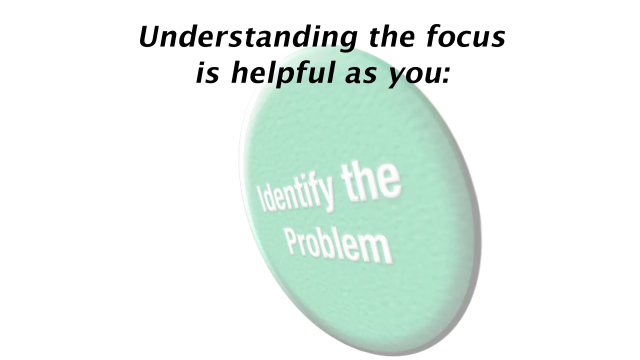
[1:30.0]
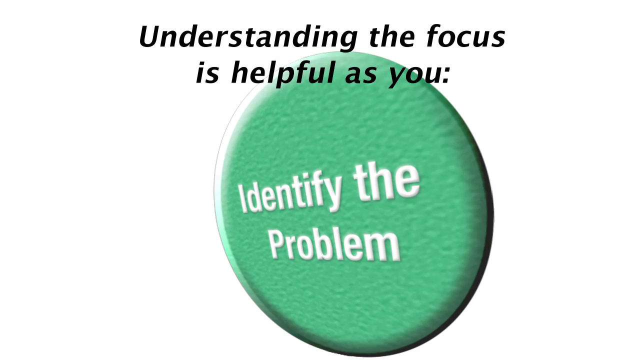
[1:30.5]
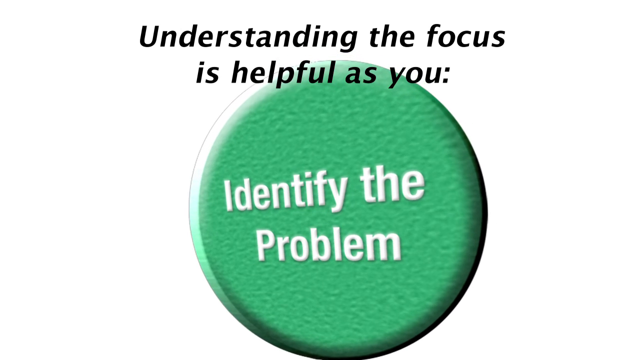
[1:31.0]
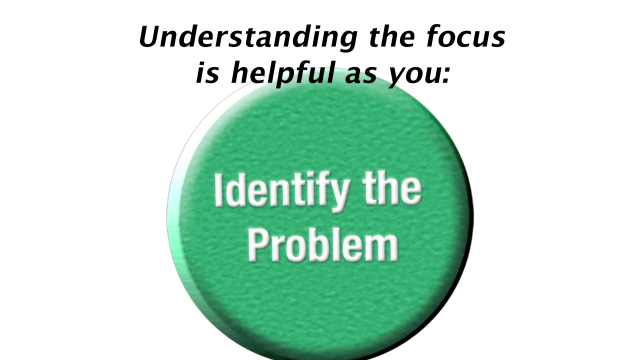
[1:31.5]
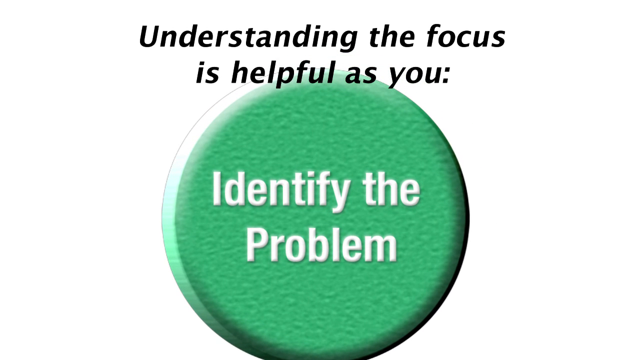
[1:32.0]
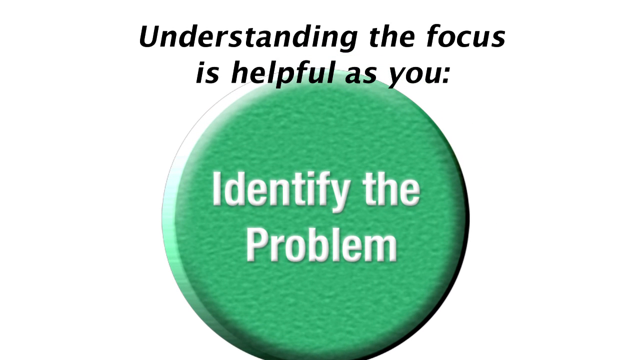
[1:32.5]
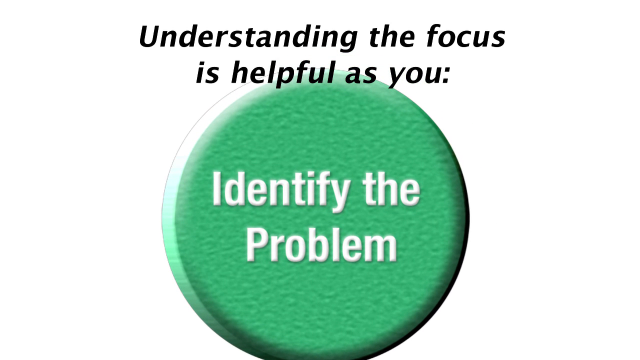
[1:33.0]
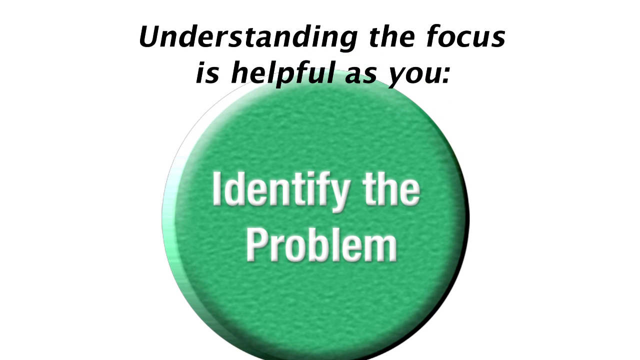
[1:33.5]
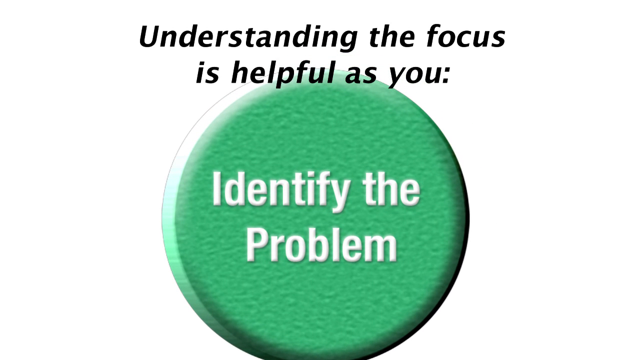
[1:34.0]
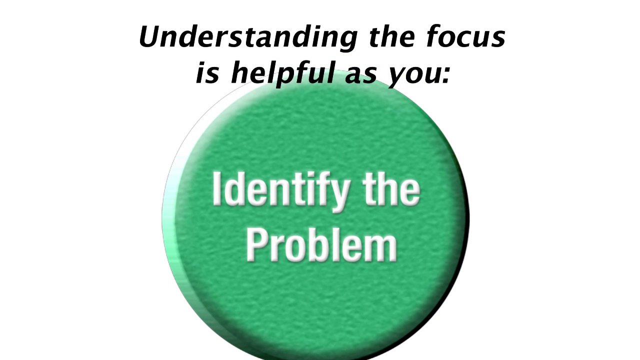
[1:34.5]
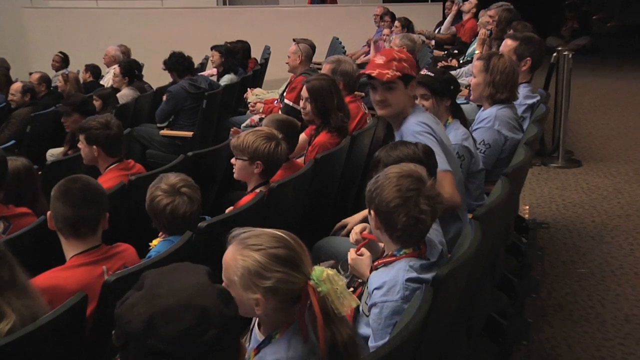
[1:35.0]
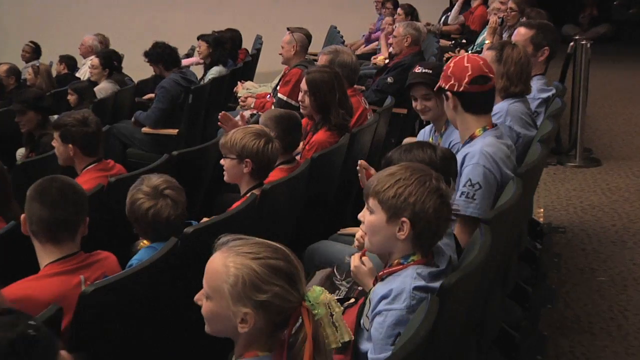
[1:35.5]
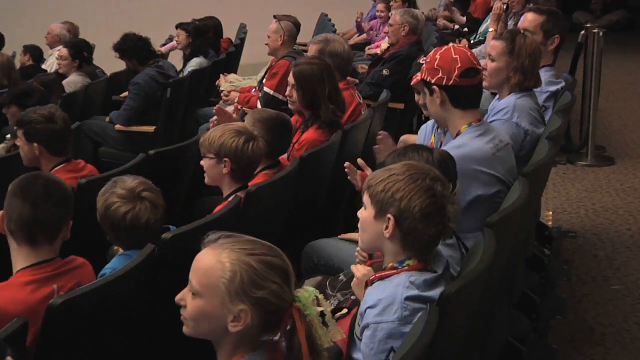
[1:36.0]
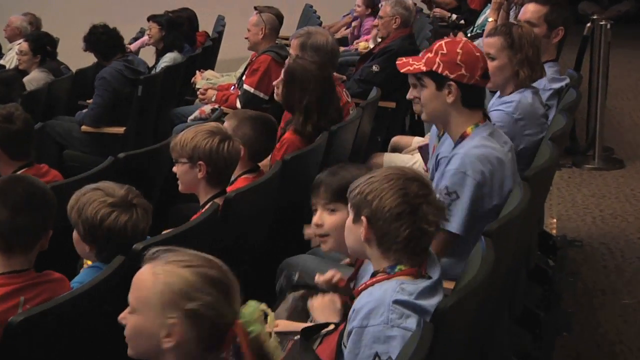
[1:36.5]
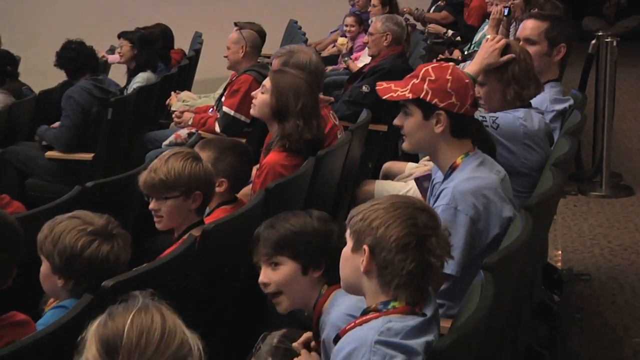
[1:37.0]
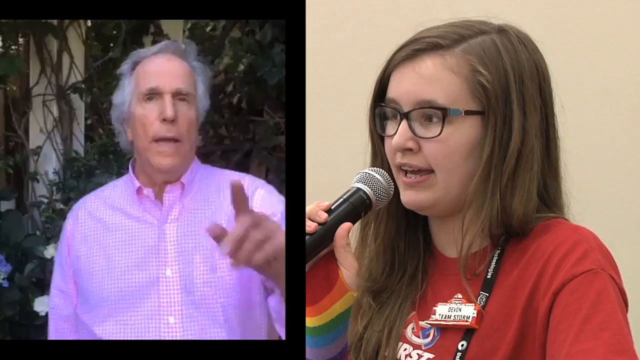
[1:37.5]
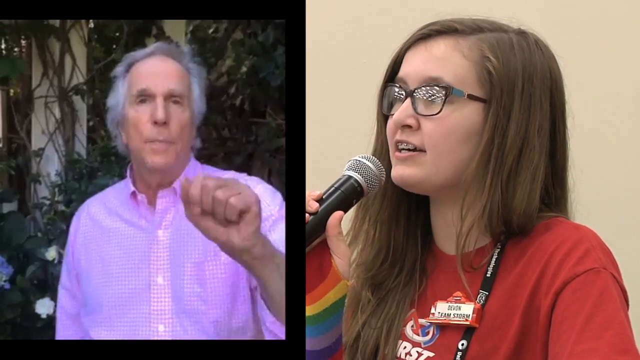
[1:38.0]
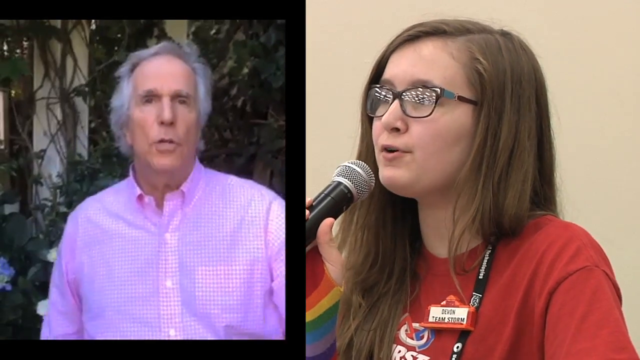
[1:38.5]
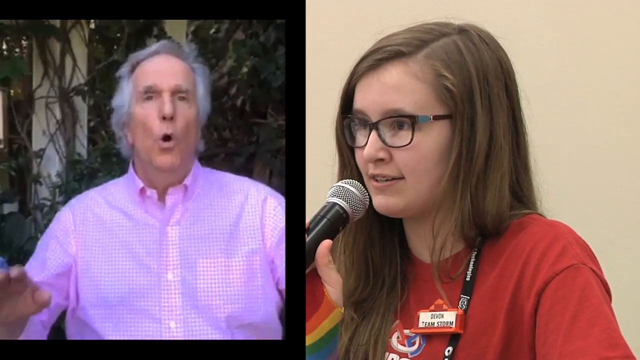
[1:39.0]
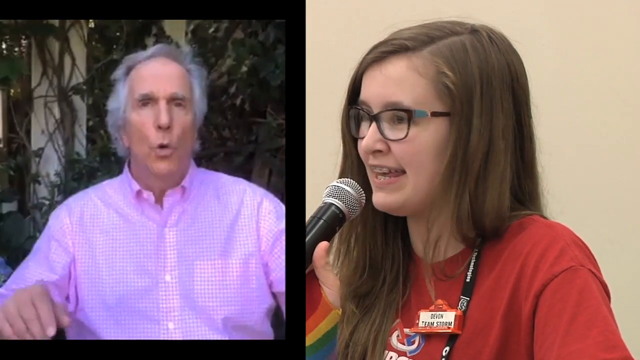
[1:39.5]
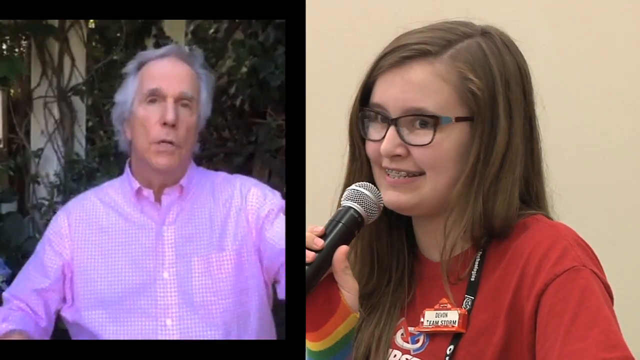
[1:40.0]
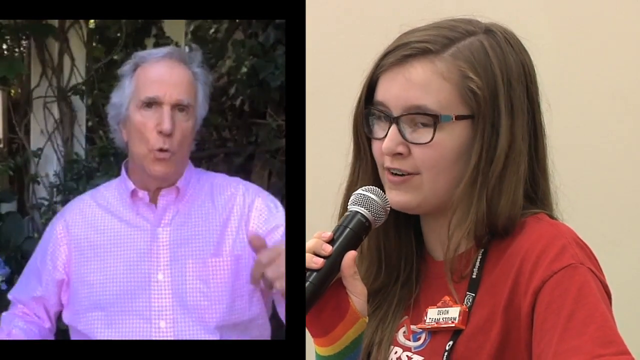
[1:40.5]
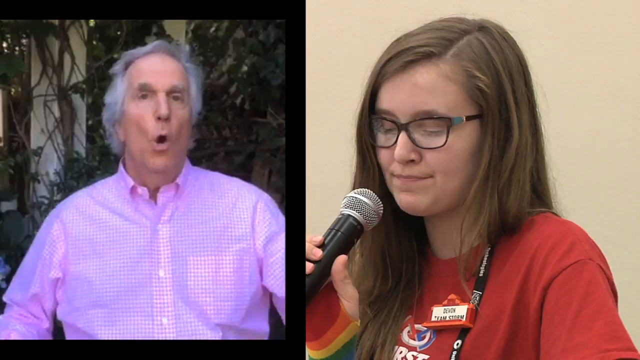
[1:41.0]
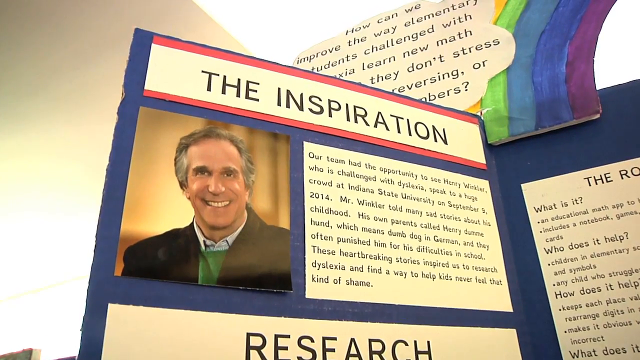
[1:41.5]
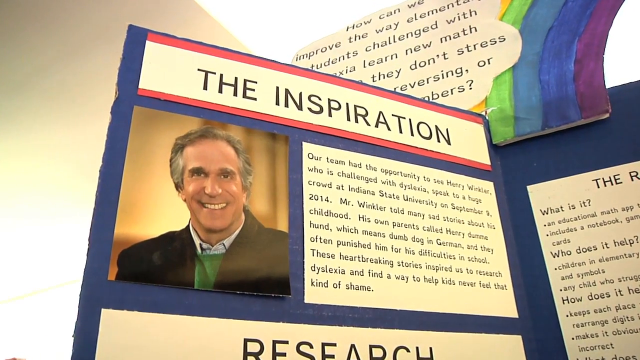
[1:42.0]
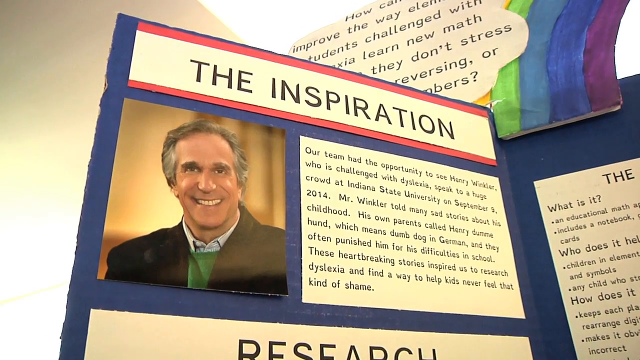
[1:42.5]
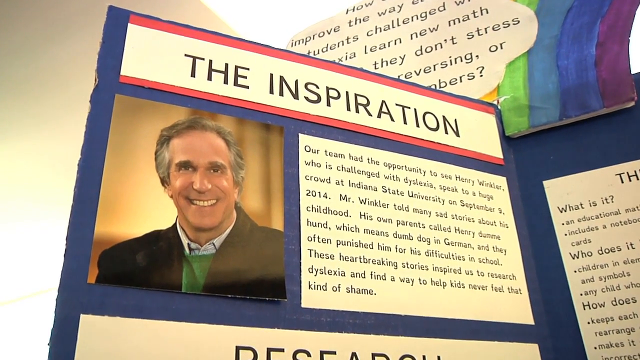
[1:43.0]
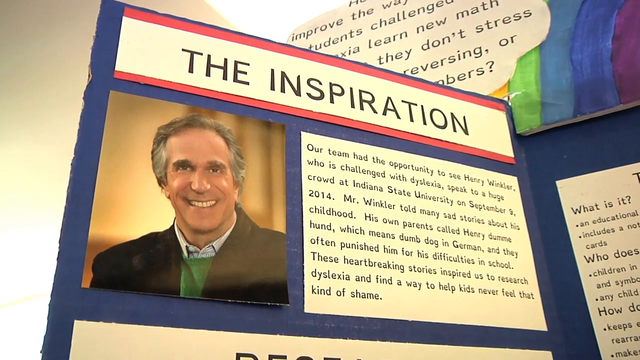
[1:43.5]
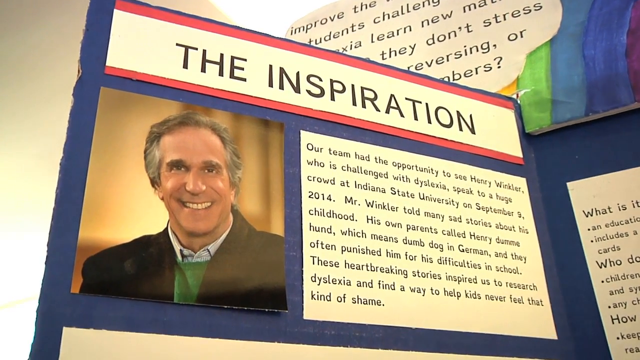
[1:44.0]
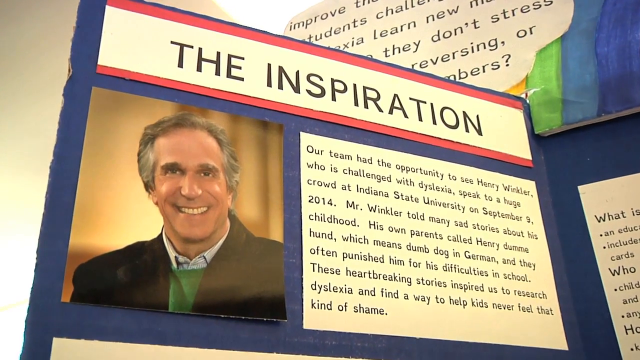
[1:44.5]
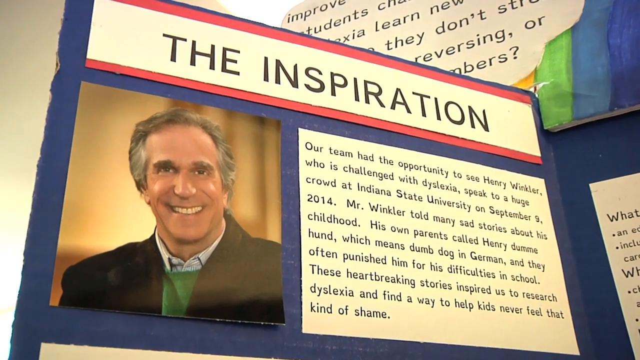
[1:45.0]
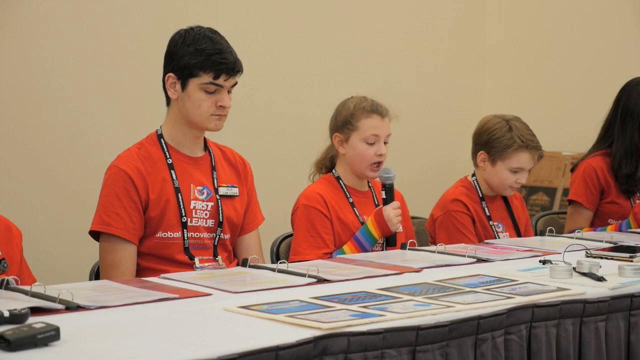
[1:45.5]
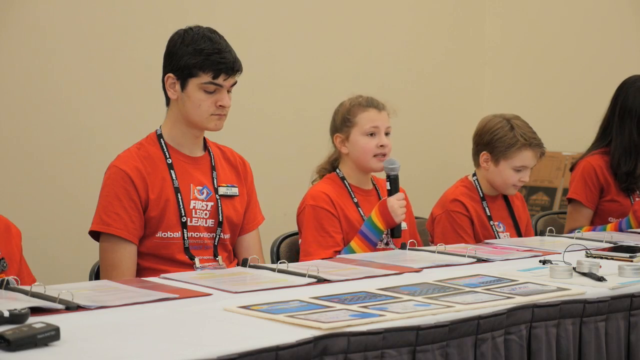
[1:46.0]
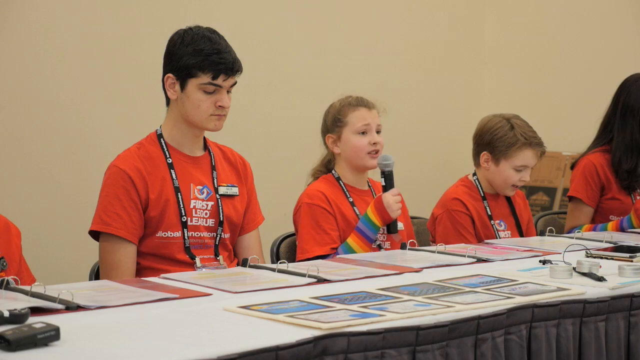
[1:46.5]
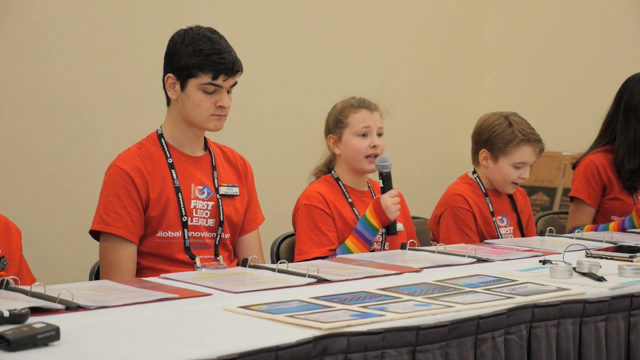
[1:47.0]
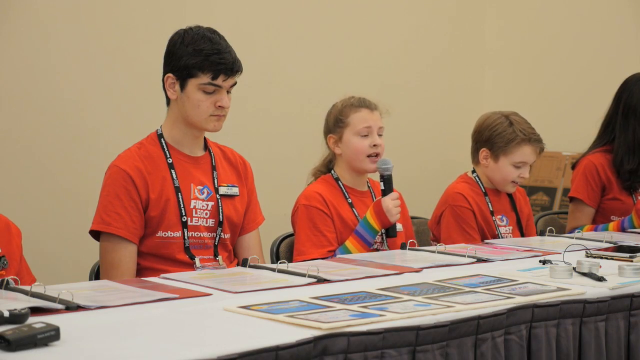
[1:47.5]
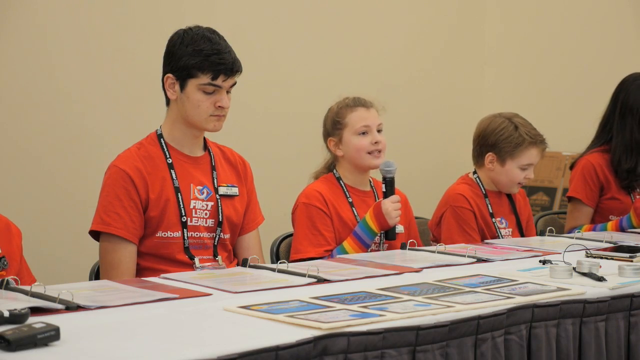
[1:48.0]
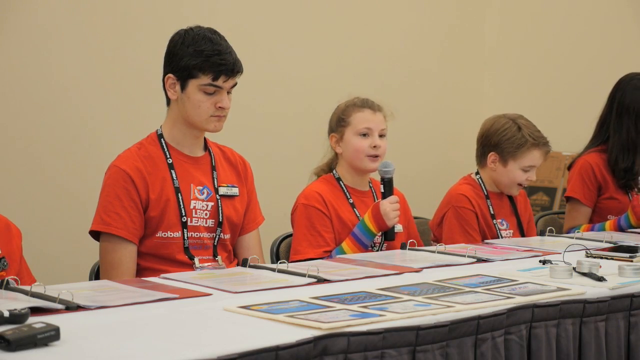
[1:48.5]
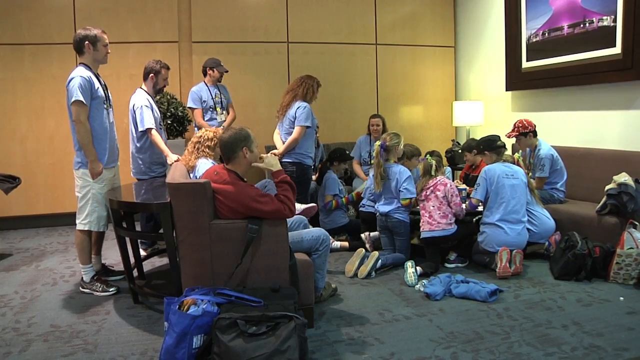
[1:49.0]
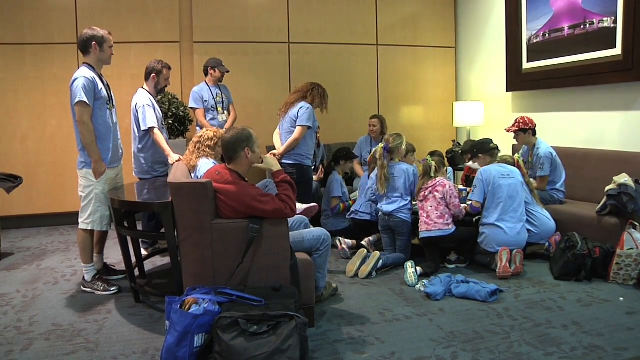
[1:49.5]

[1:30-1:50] A message across the top of the screen begins "understanding the focus." Underneath, on a white background, a mint green circle forms on the screen that says "identify the problem," turning a darker green as it forms. The video then shows an audience full of young kids, very eager to learn. The scene changes to Henry Winkler on the left in a purplish pink button-up shirt, talking, and on the right a young girl with glasses and a badge around her neck giving a speech in a very confident manner. A sign says "Be Inspiration" and shows Henry Winkler, and the video shows that the team had the opportunity to see Henry Winkler, who is challenged with dyslexia.